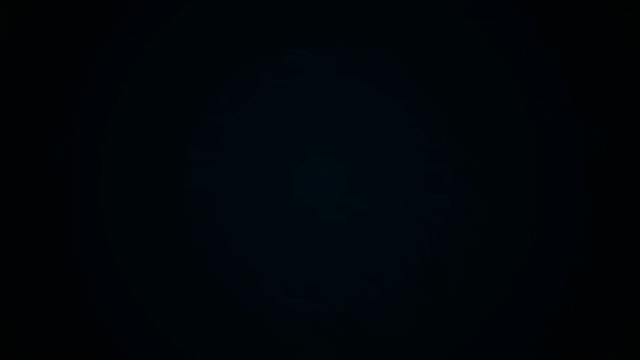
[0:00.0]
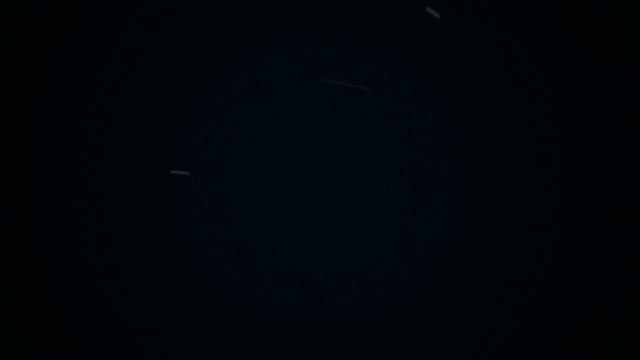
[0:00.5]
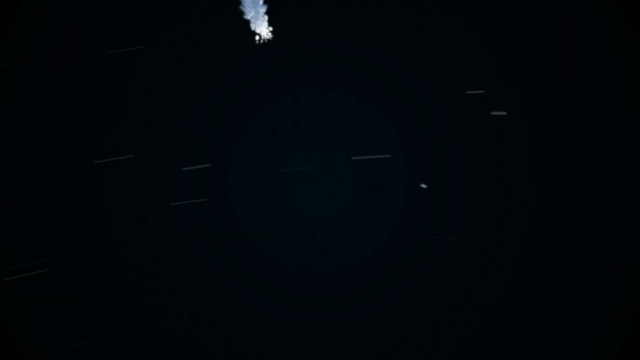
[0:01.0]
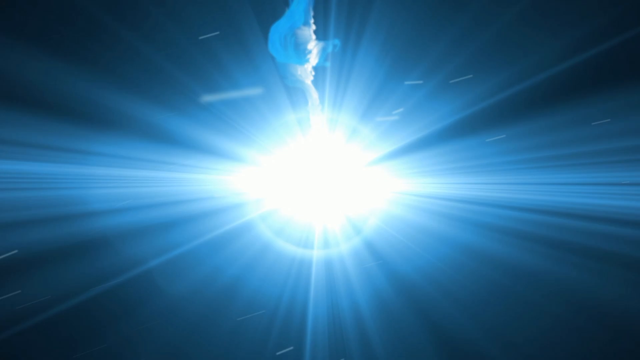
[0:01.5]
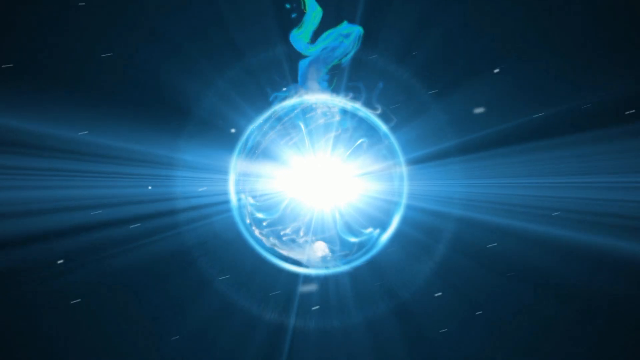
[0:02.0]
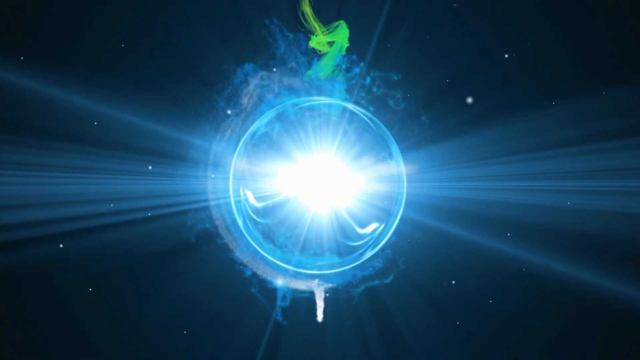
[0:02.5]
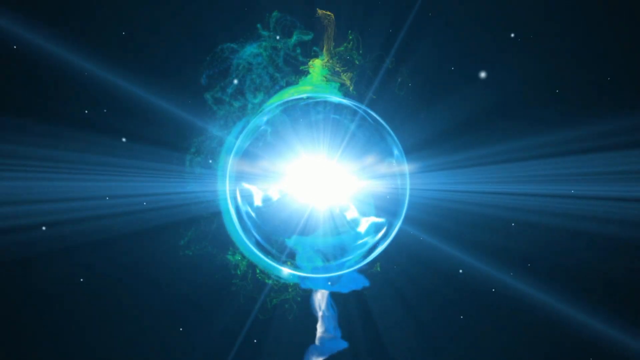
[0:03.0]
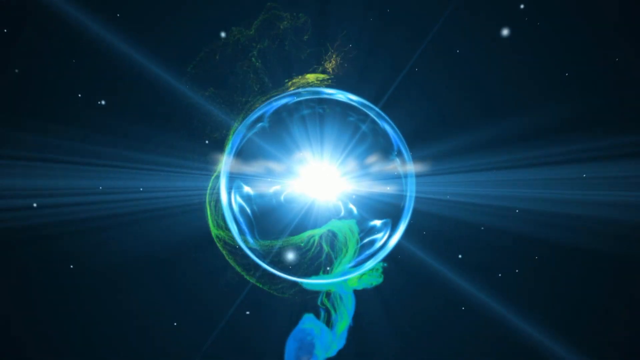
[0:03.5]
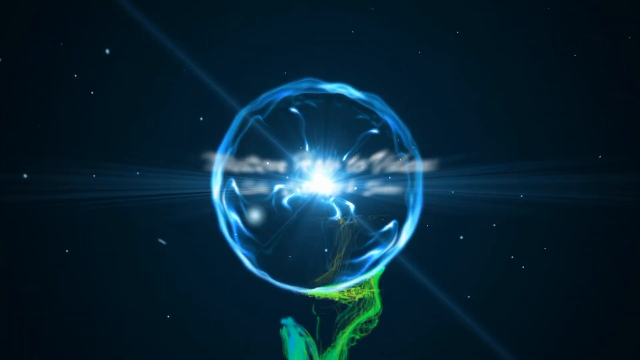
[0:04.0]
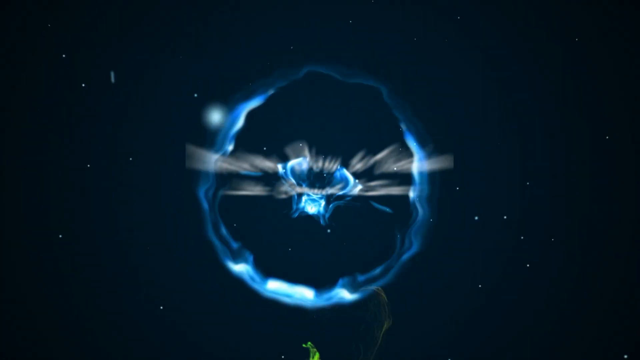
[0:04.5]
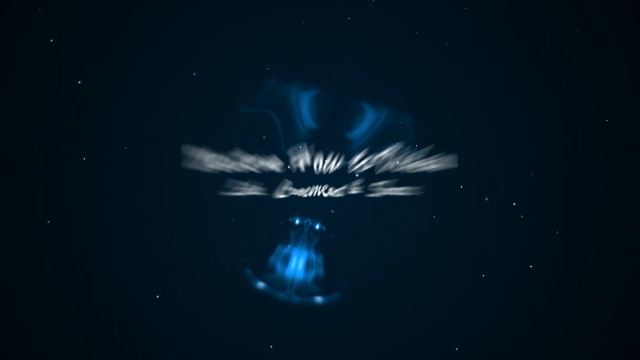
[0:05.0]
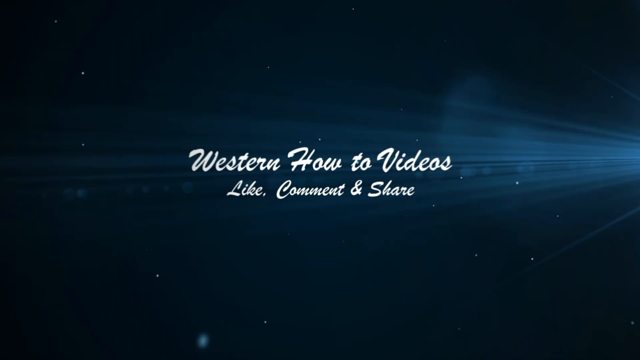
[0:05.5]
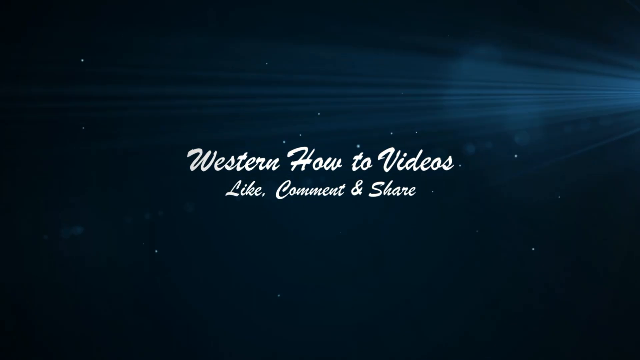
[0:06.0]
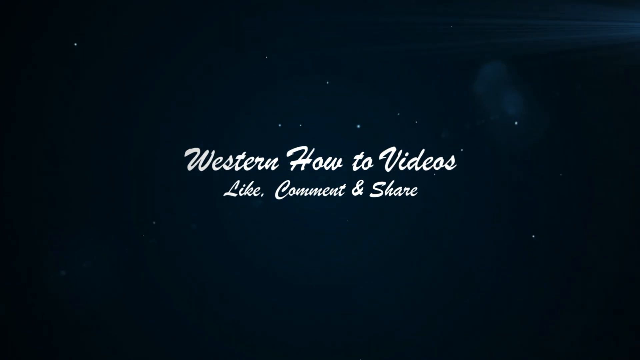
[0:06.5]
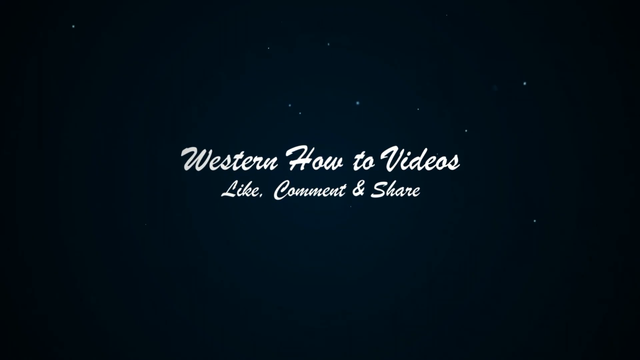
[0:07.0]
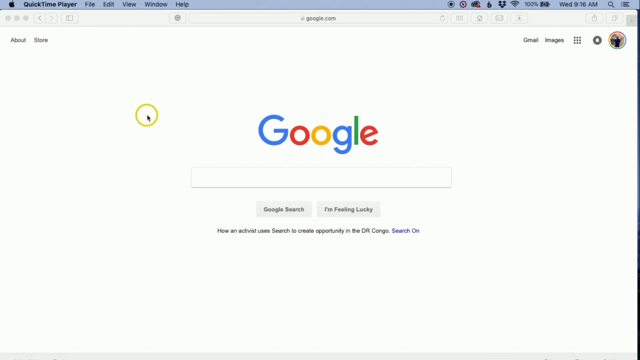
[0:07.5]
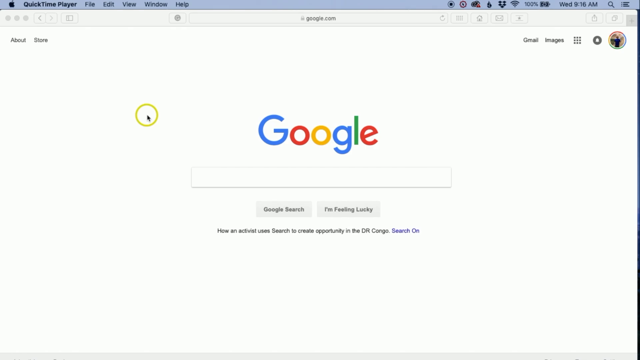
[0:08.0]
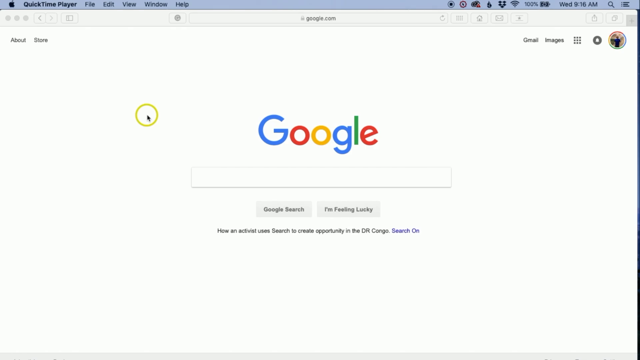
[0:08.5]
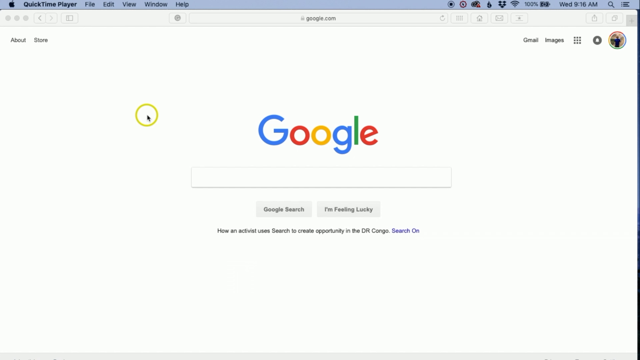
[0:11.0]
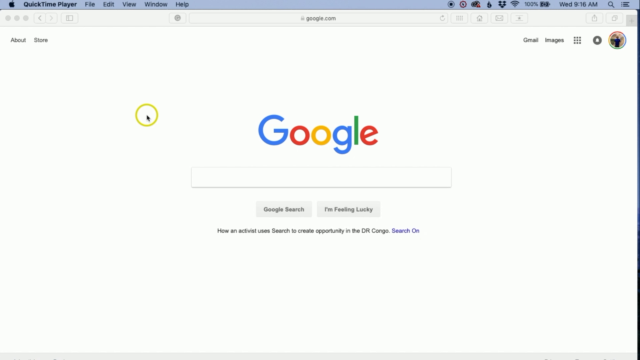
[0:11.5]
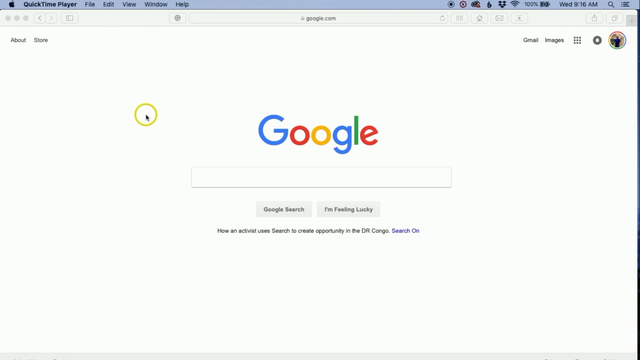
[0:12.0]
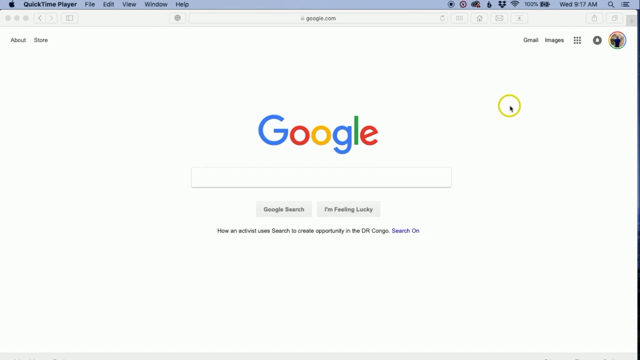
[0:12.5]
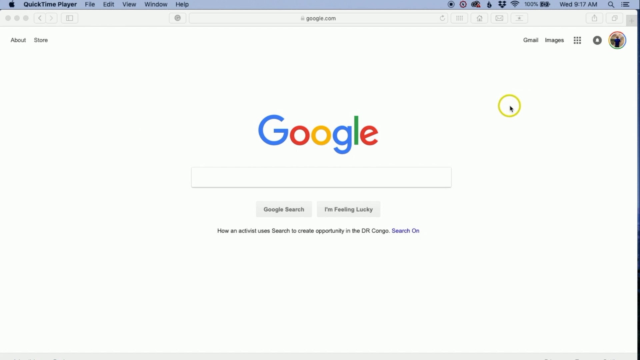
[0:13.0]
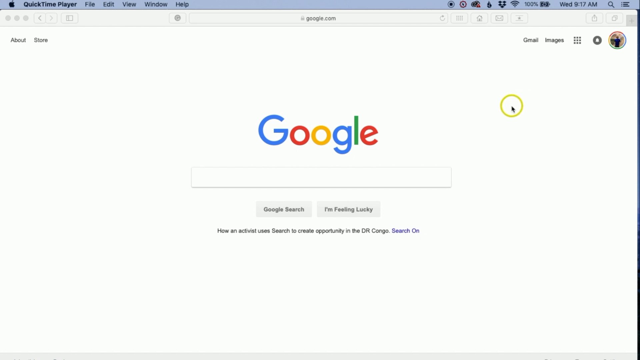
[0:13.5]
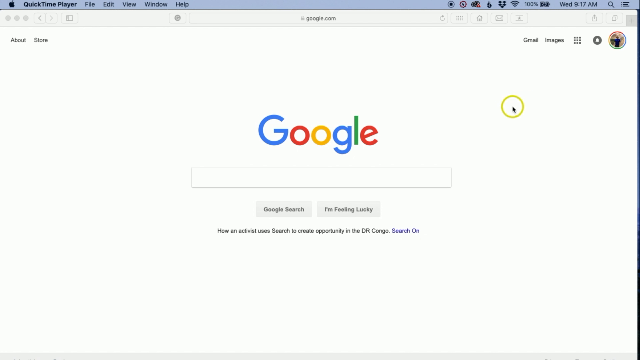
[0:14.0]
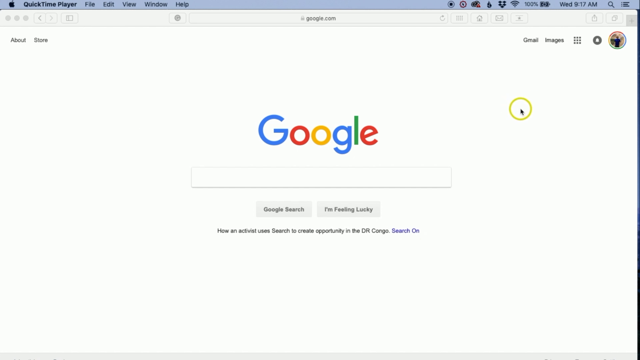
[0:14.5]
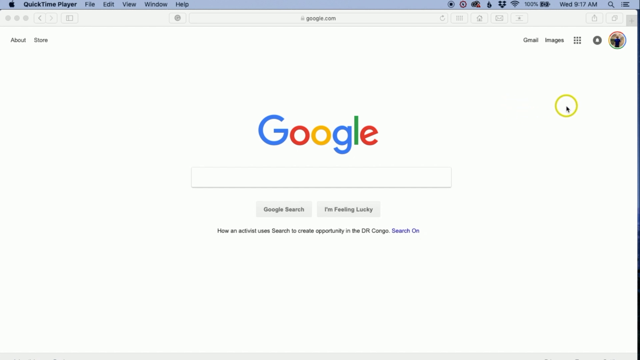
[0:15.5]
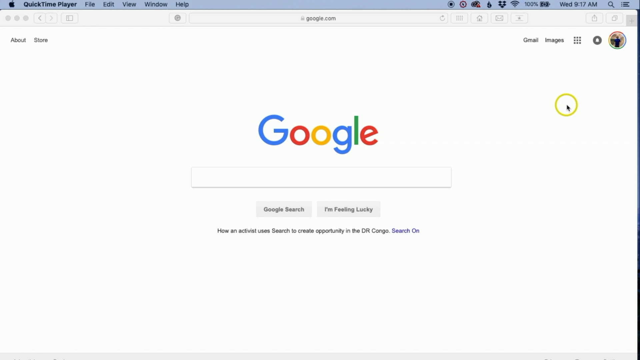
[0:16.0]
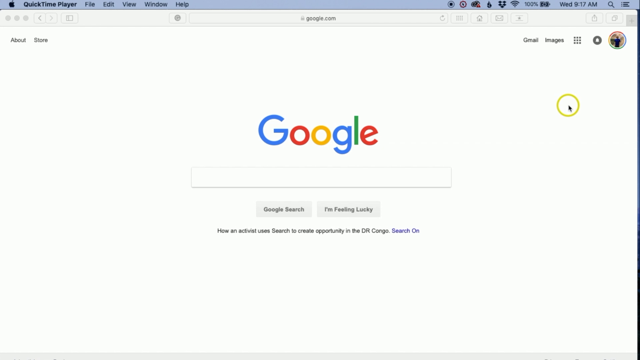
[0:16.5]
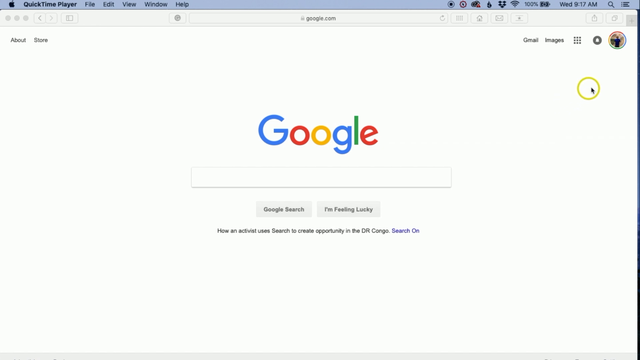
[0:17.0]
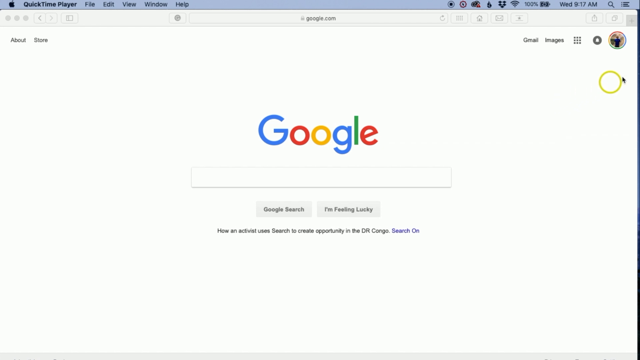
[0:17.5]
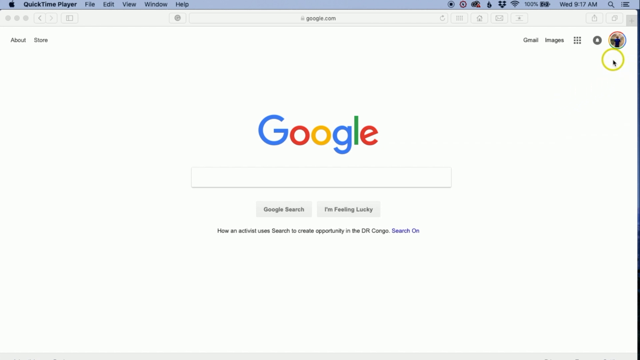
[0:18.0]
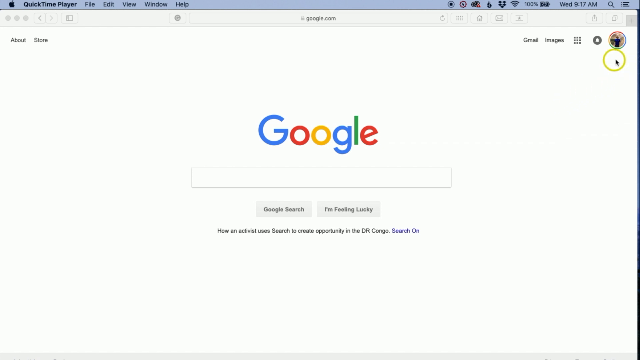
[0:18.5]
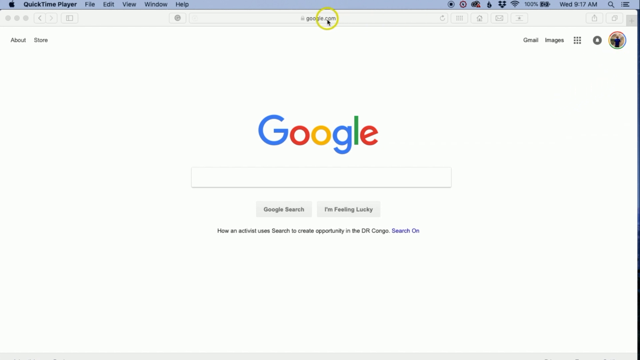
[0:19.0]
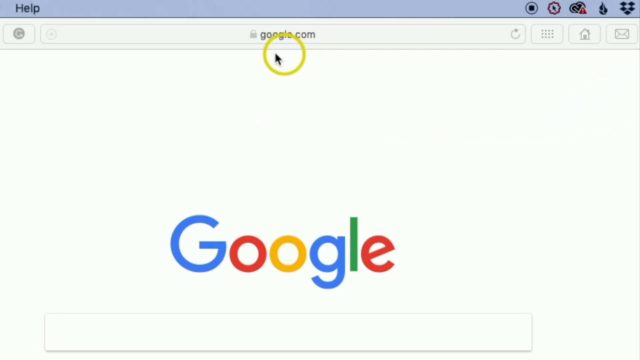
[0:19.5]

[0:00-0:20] The video starts on a black screen. An animation plays with particles coming around, a very large ball, a big explosion and bright light. Some kind of rays appear, a big hole shows up, and text comes in, apparently mentioning like, comment, and share. Next, a yellow circle with a cursor inside it appears at the top left. A Google page is shown with a rectangle for a Google search and "I'm feeling lucky". At the very top it reads "QuickTime Player, File, Edit, View, Window, Help", and at the very bottom it reads "Hi, I just used the search to create opportunity in the DR Congo, it's pretty charming." The view lingers here. On the right side, above the Gmail and Images links, there are some squares and an icon. The cursor moves further to the right toward the icon and clicks on the address bar.